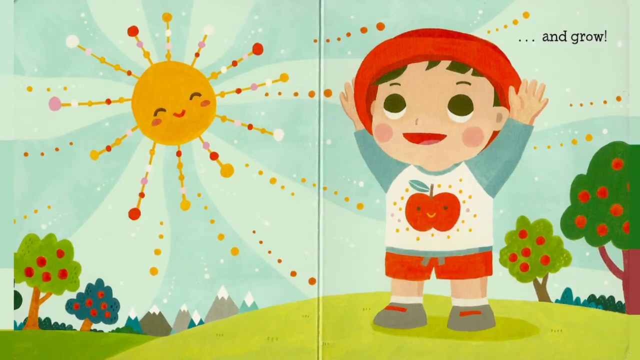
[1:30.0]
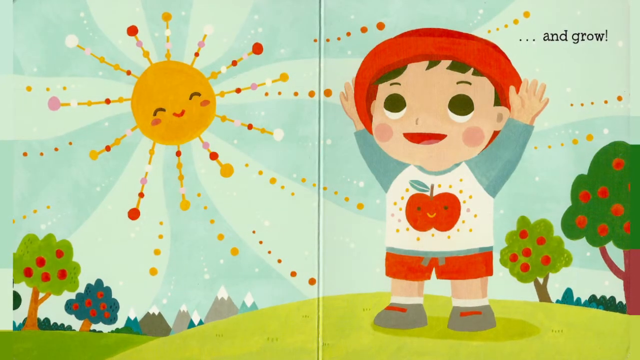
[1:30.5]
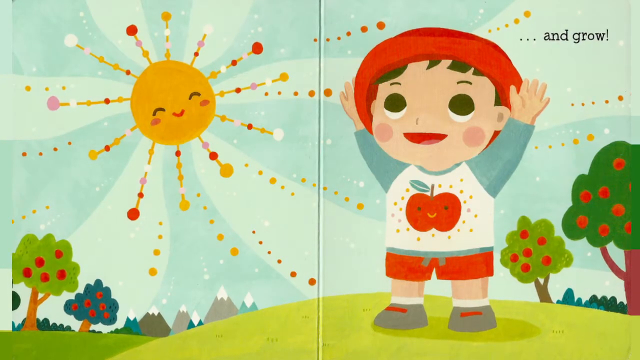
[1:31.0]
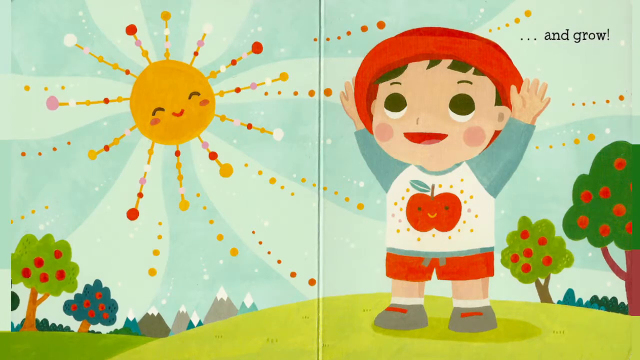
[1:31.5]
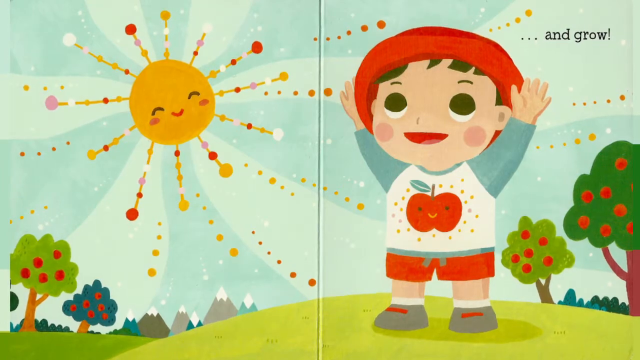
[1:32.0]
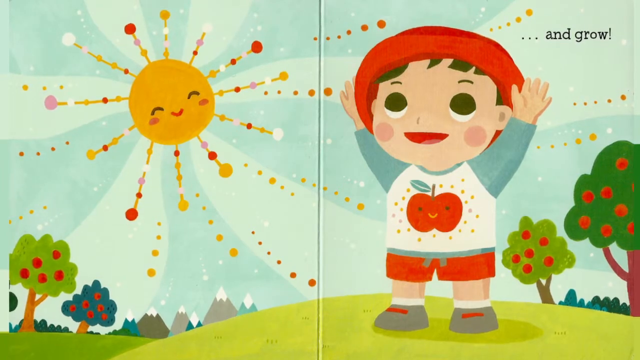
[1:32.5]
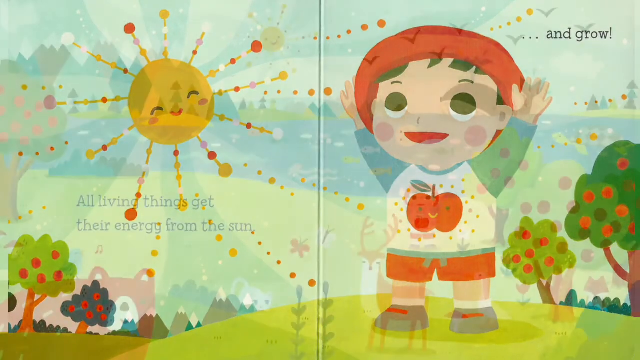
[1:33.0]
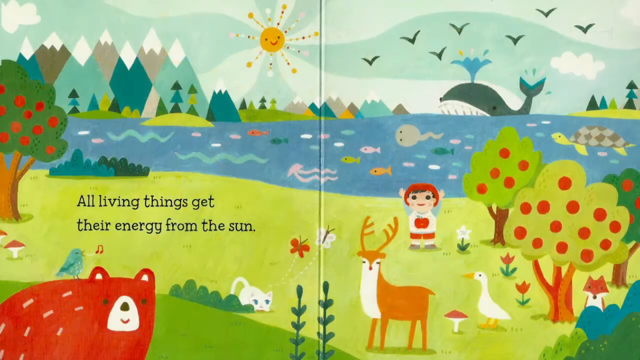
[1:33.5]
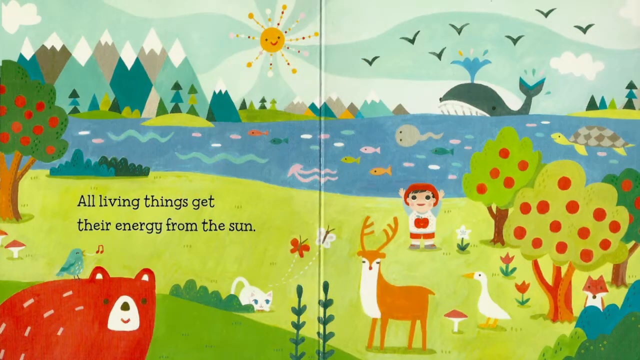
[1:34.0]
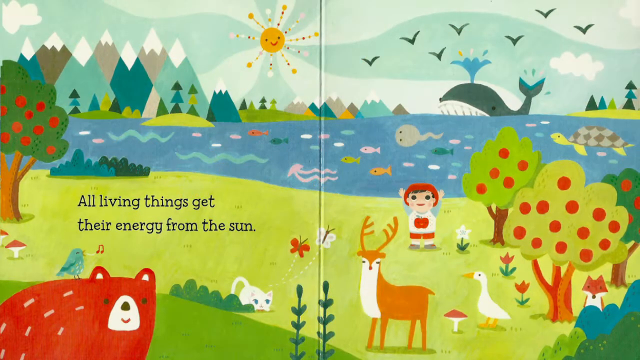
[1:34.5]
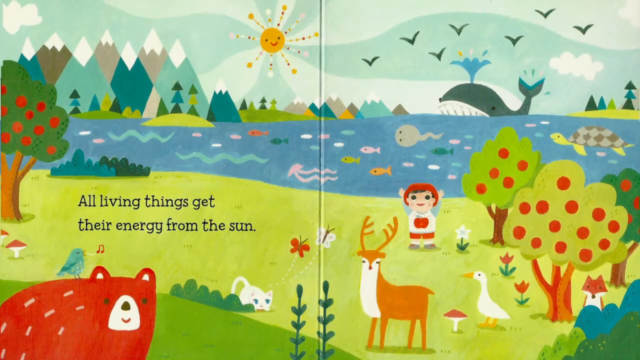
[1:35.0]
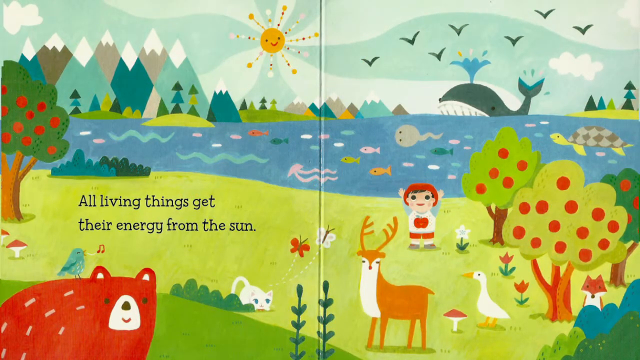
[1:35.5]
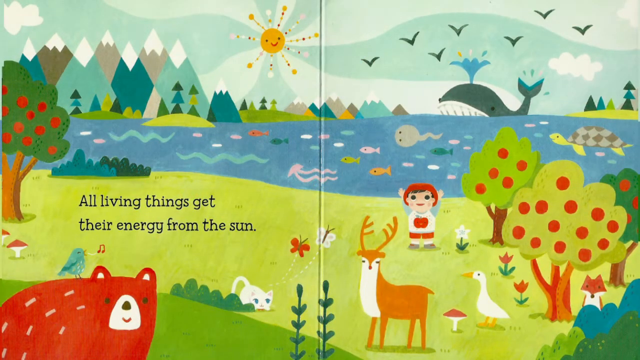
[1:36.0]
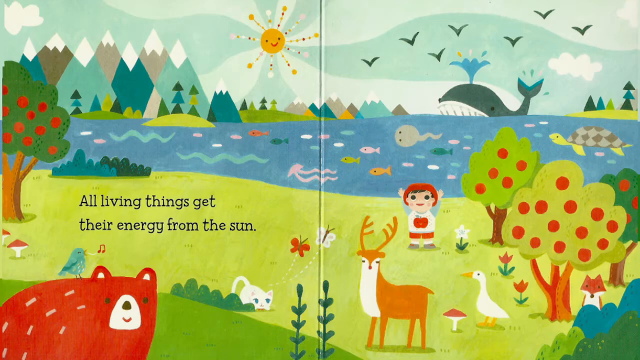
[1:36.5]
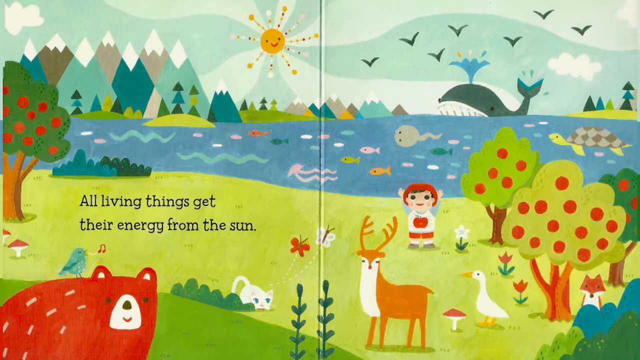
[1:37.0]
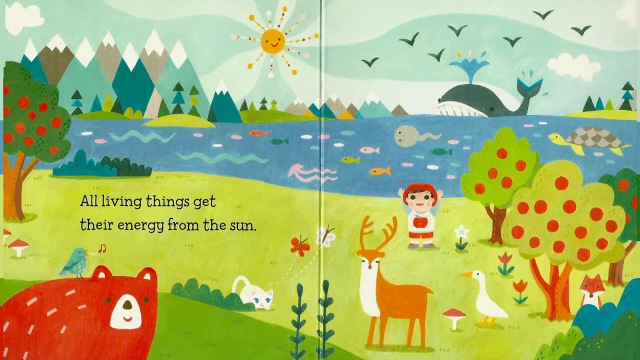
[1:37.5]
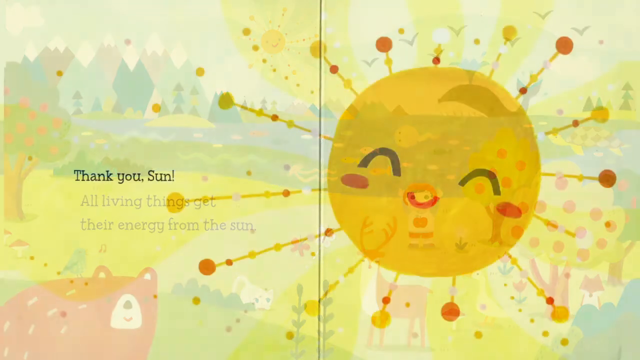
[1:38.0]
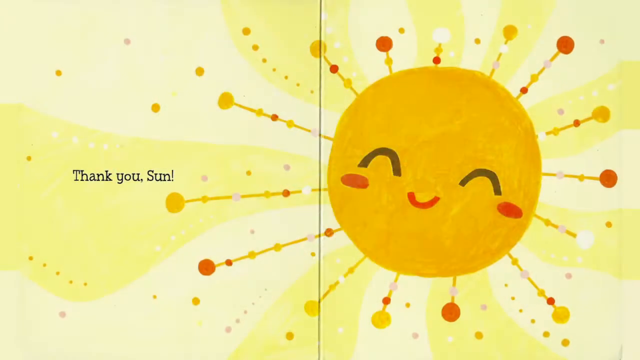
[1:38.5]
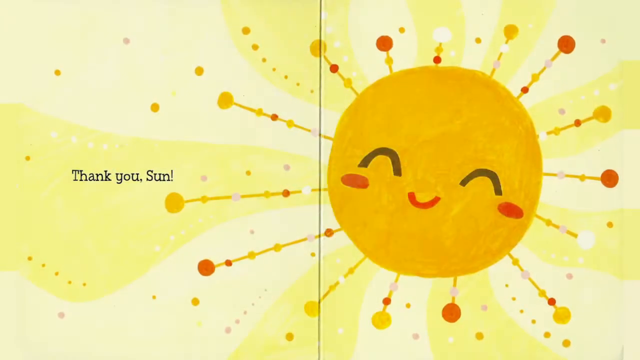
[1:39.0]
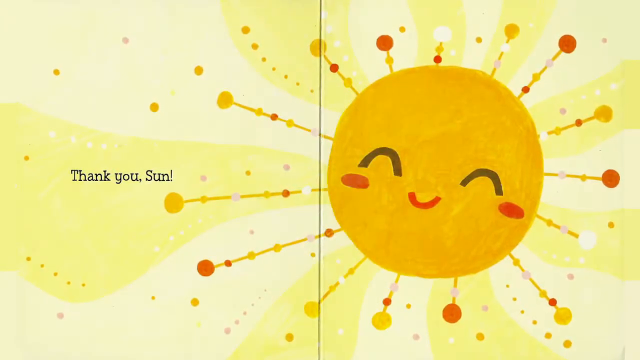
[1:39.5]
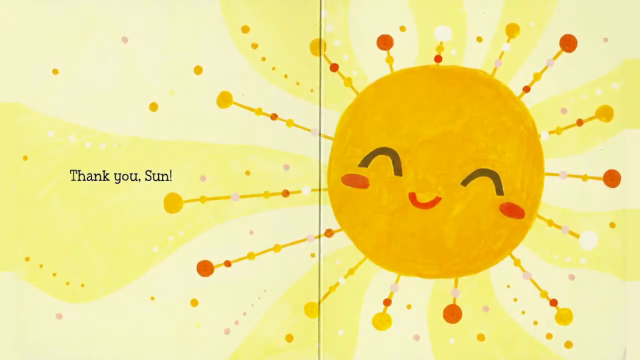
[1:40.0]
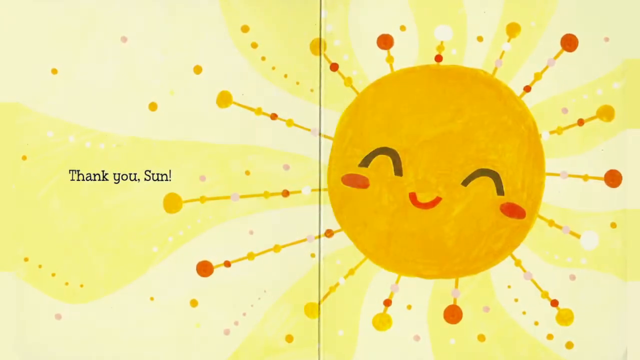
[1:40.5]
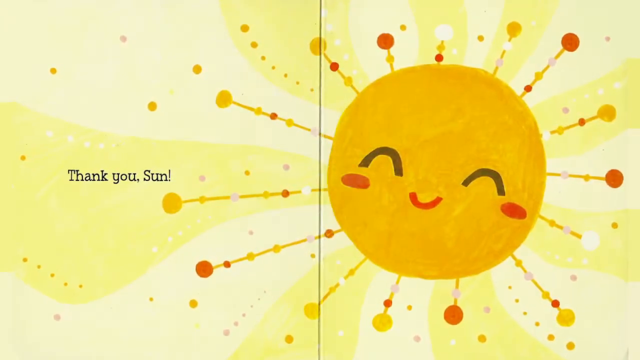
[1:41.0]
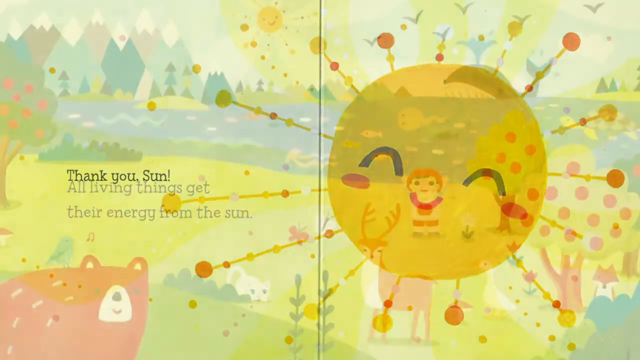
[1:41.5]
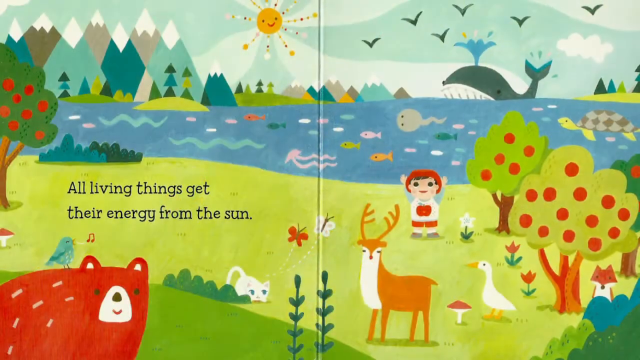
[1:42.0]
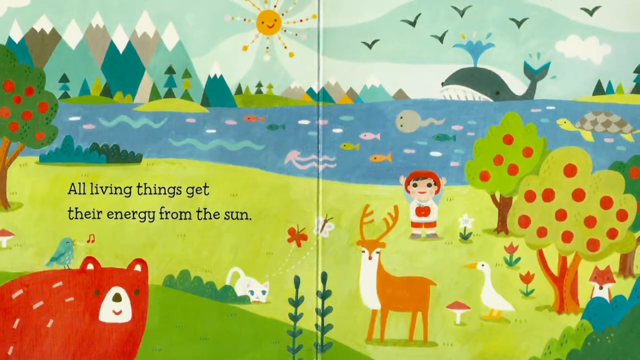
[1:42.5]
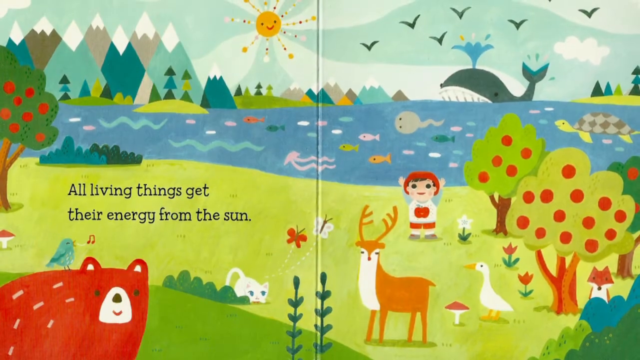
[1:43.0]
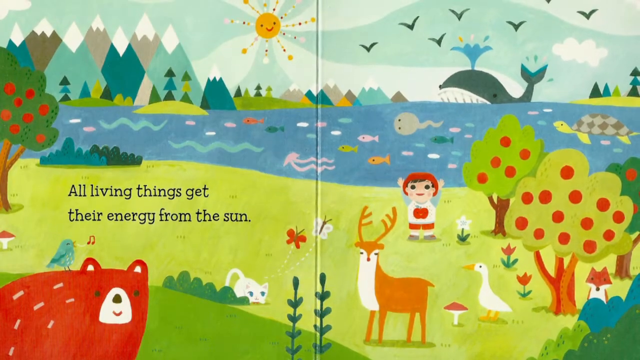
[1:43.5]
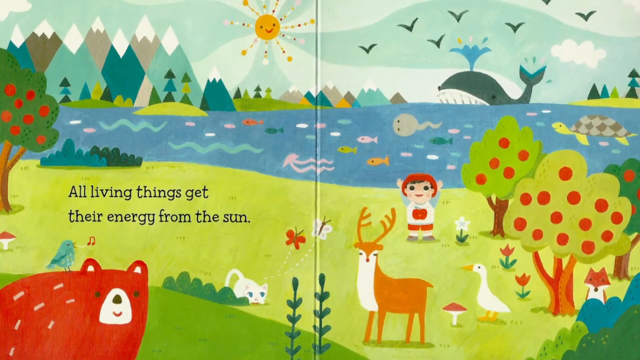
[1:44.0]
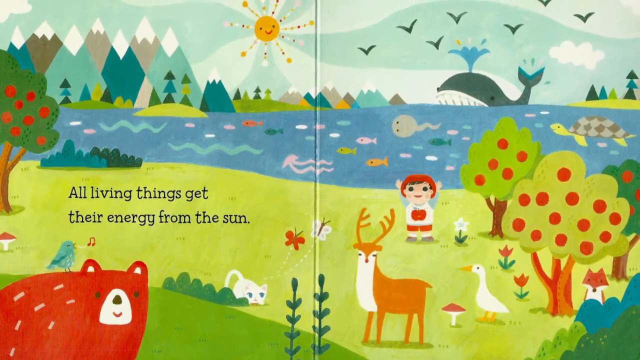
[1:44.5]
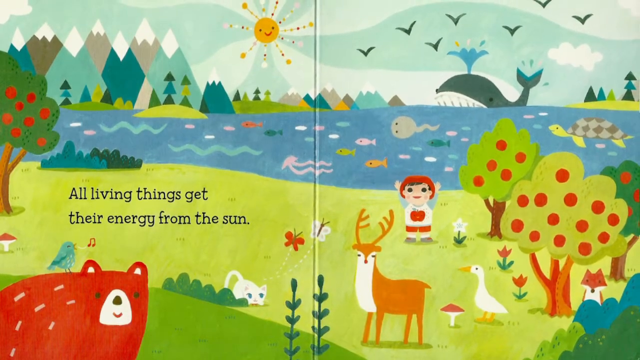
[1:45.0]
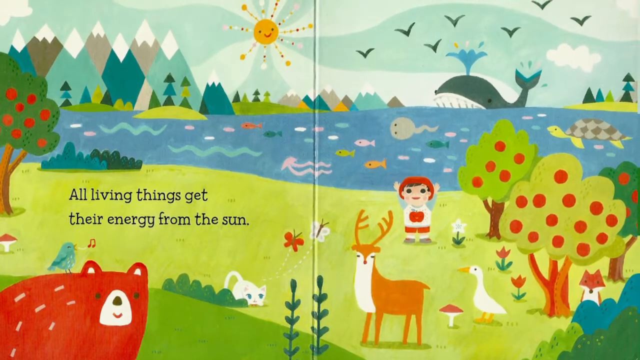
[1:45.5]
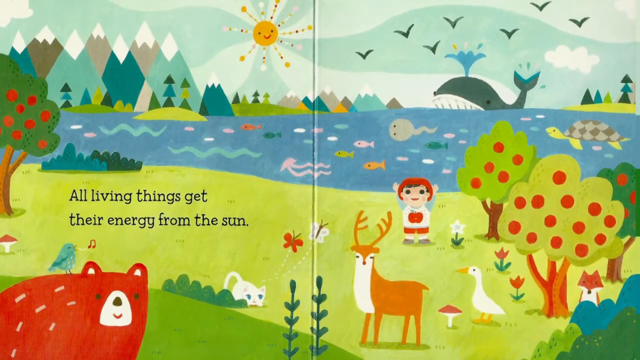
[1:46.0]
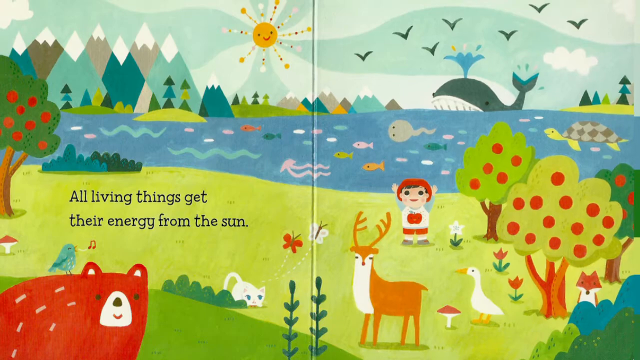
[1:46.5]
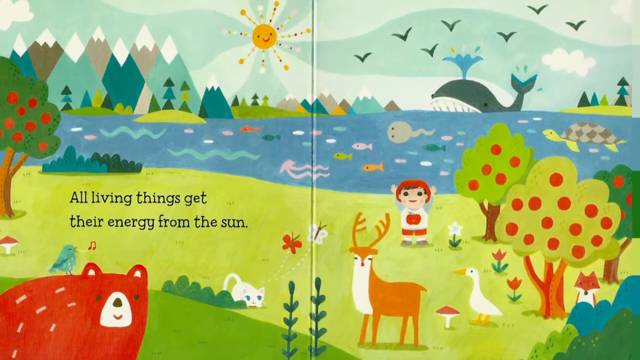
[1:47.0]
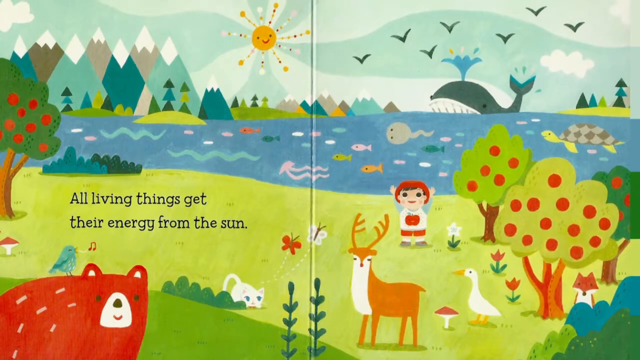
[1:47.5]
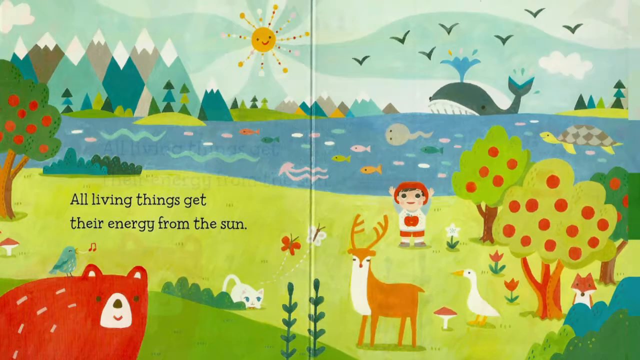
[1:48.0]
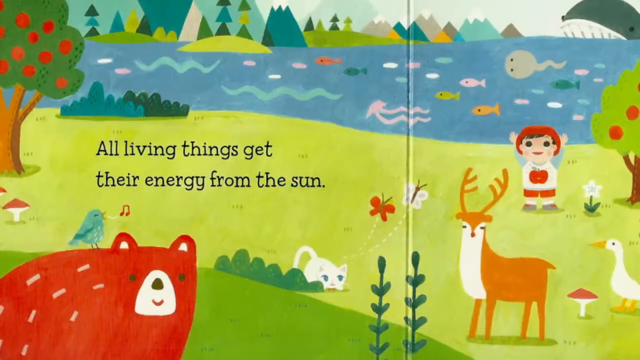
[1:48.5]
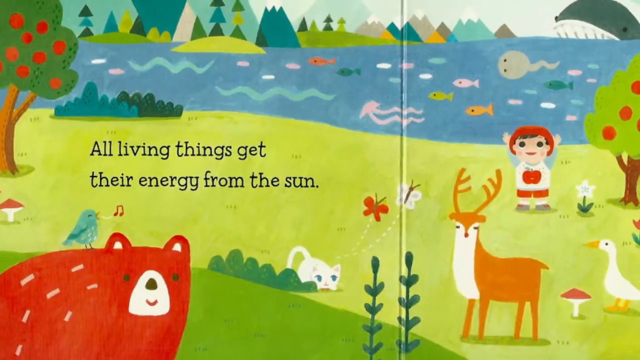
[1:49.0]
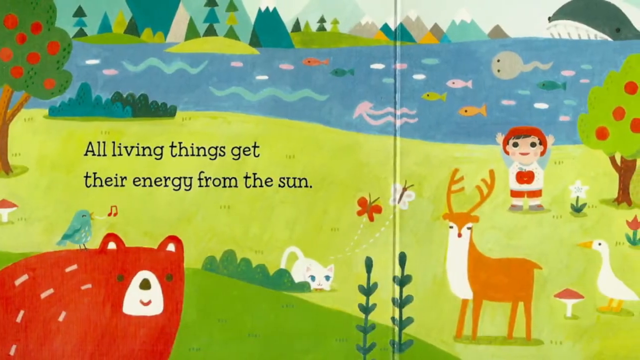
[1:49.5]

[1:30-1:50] The left page shows the sun above two trees: one is light green with red apples, and the other, which looks further in the background, is darker green with red apples. In the background are some gray triangular mountains and one turquoise mountain, all with white tips. The right page has a large image of the child with an apple on his t-shirt, which is white with blue sleeves. He wears the same red hat with a lighter red trim, is smiling, and has both arms in the air. To the child's right are another small green tree with apples and a larger tree with apples. The background is light blue. The next page says "all living things get their energy from the sun" in text on the left. There is a green tree at the border, then something like a river or a lake, and a series of seven similar triangle-shaped mountains with some triangle shapes in front of them. The sun is closer to the middle of the book. In the background there is a whale spouting on the right, as well as a turtle, a ray and some fish in the water, and some v-shapes for birds. The child is small on the right, in front of a deer and a goose. On the border are three trees in various shades of green with red apples, and on the bottom left of the page is a cartoon bear. The video then goes to a page with just the sun, which says "Thank you sun!" and "All living things get their energy from the sun."